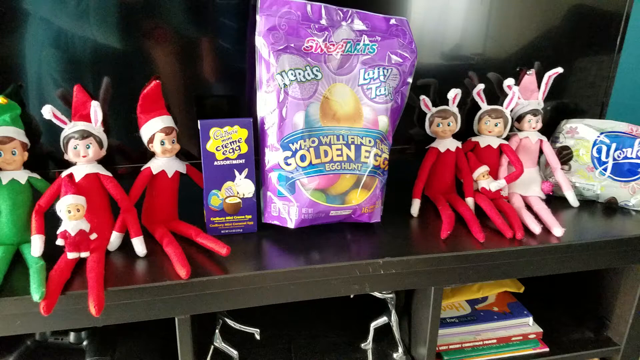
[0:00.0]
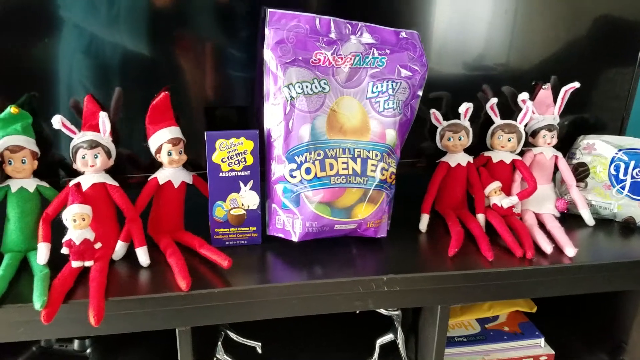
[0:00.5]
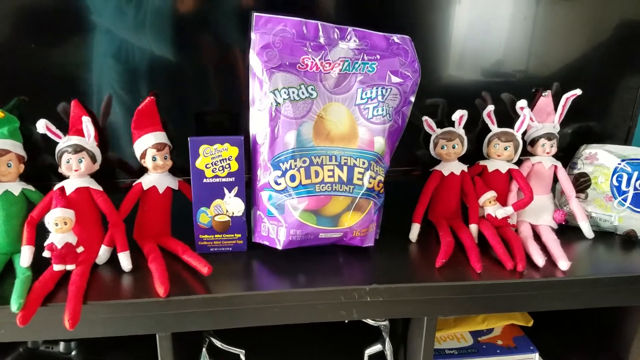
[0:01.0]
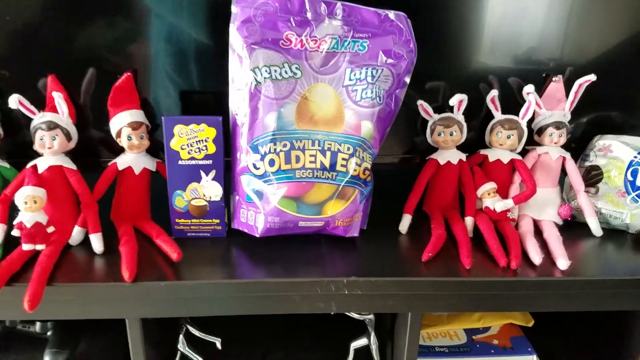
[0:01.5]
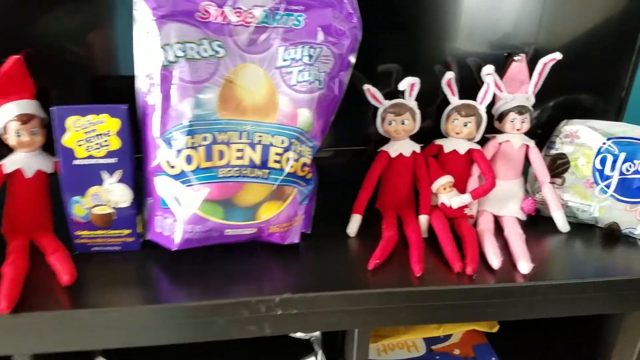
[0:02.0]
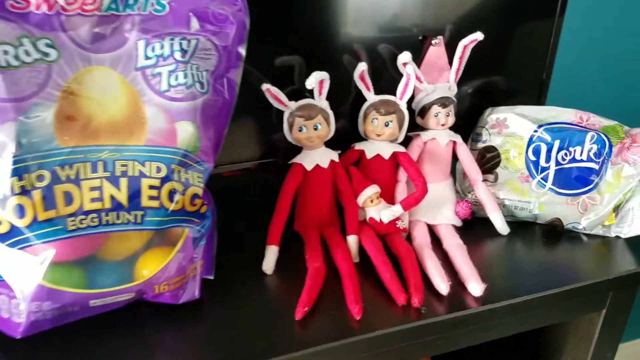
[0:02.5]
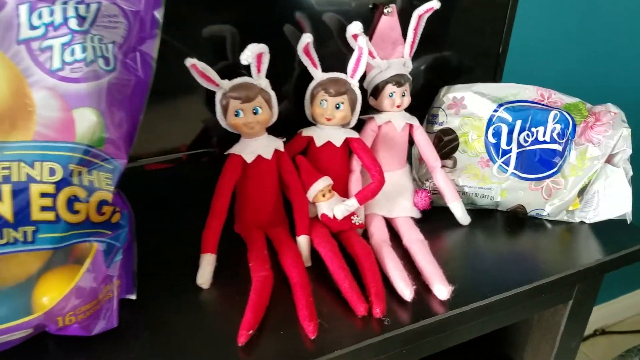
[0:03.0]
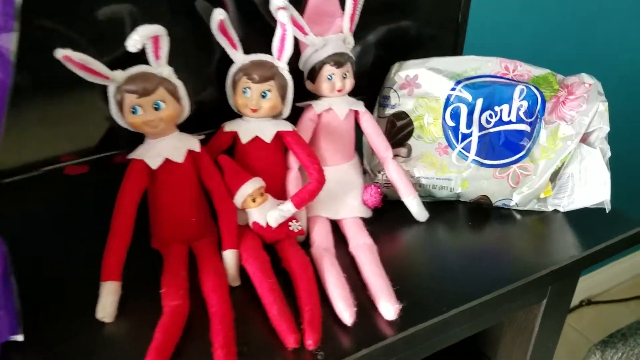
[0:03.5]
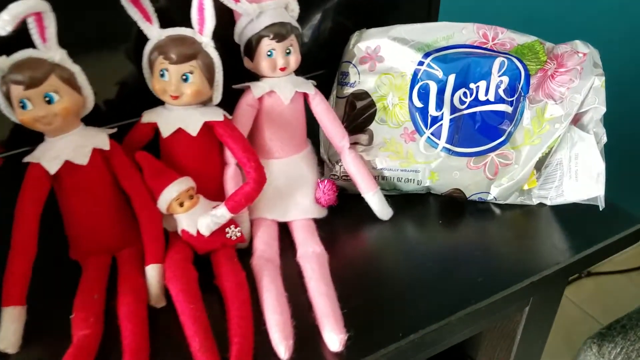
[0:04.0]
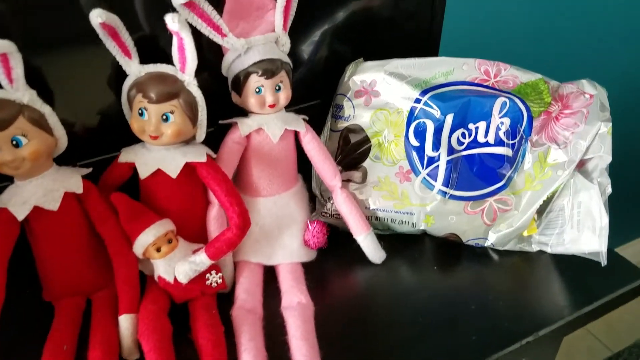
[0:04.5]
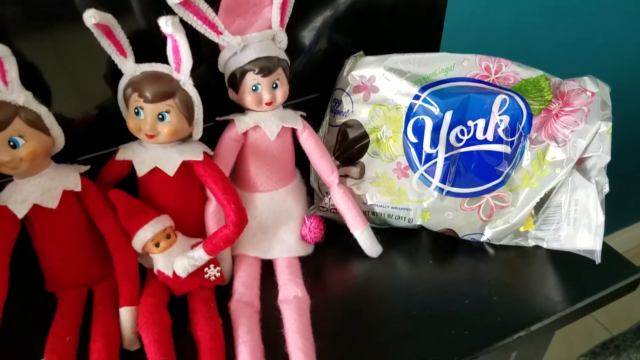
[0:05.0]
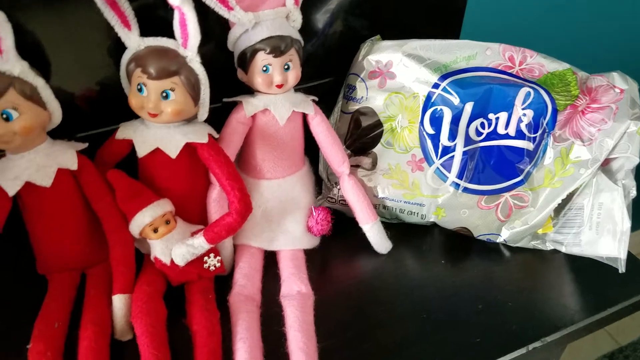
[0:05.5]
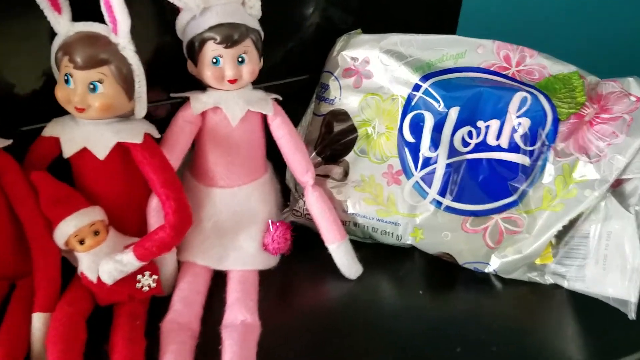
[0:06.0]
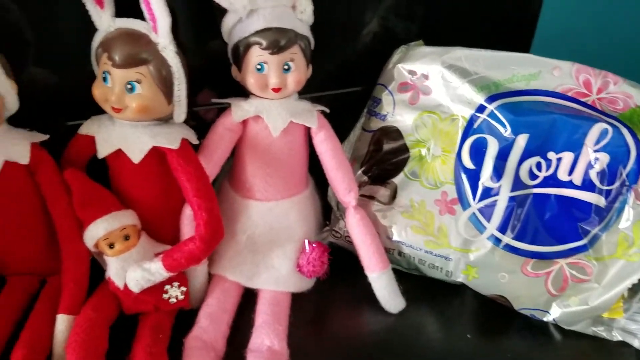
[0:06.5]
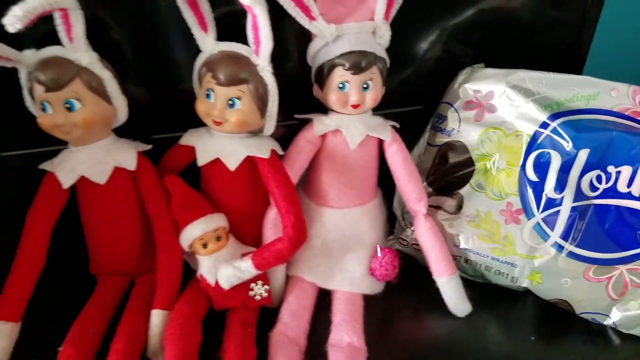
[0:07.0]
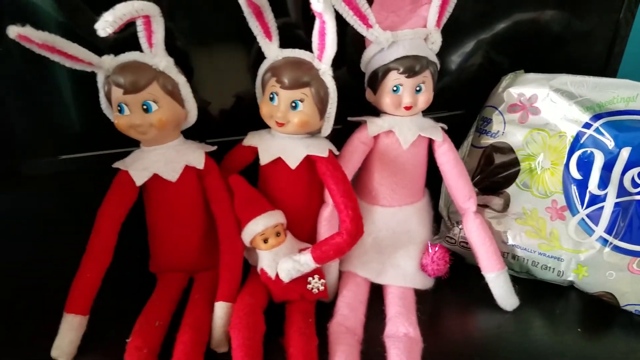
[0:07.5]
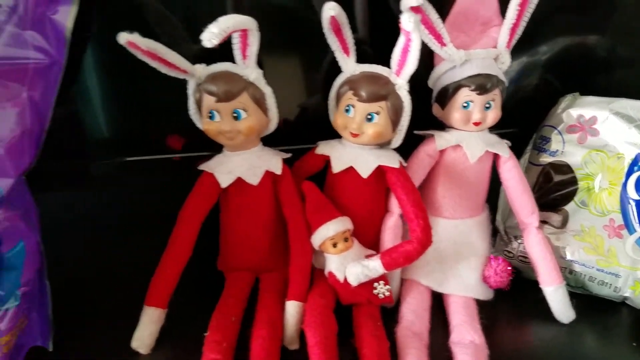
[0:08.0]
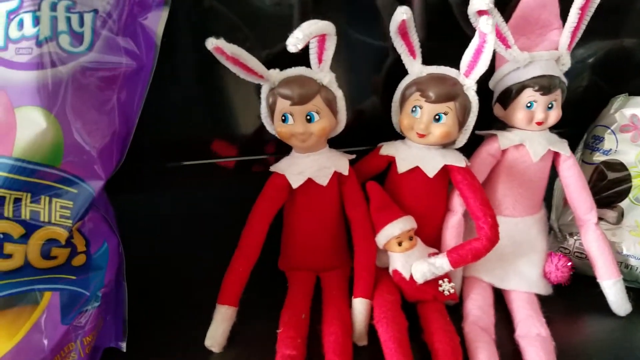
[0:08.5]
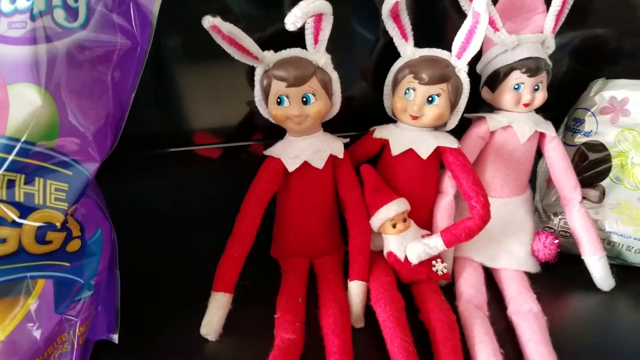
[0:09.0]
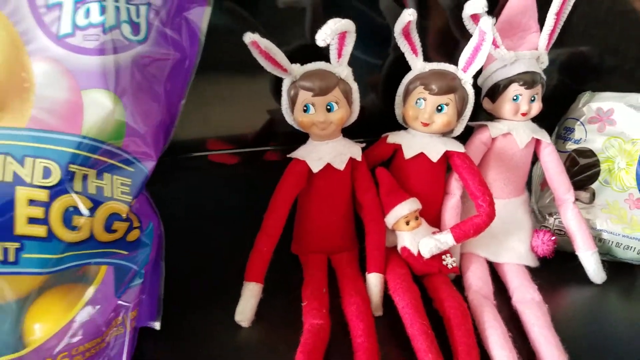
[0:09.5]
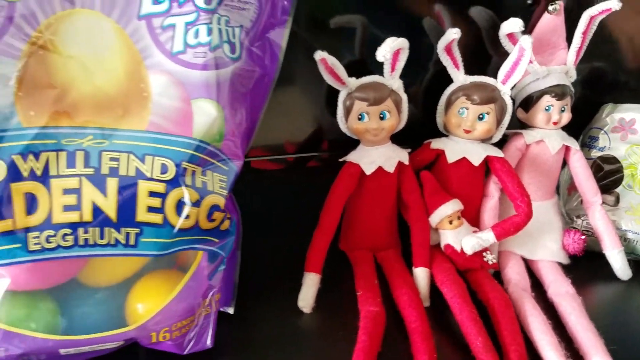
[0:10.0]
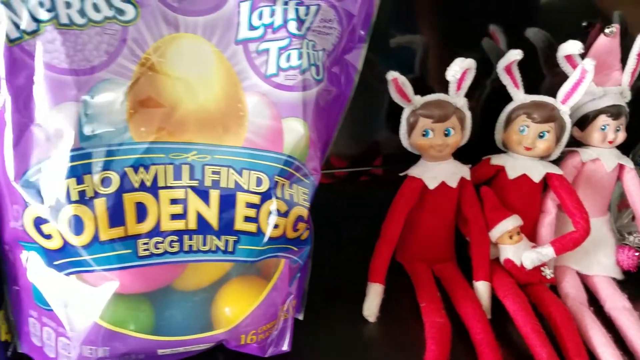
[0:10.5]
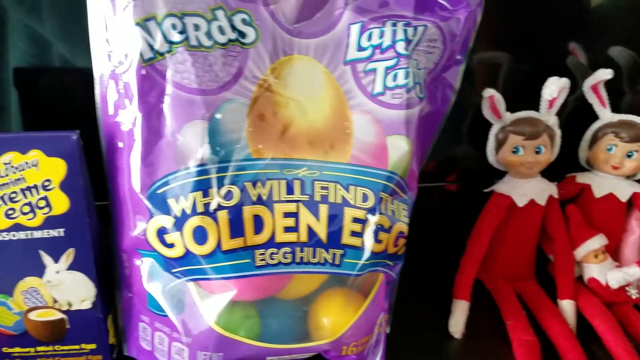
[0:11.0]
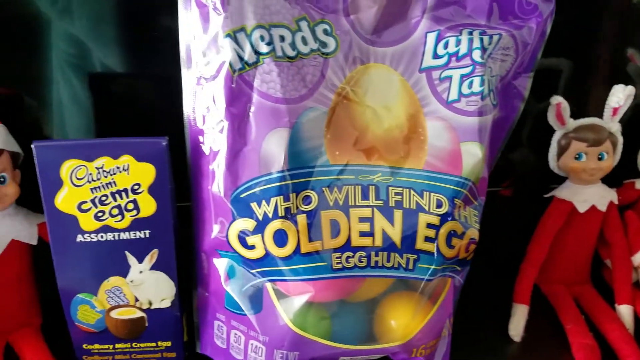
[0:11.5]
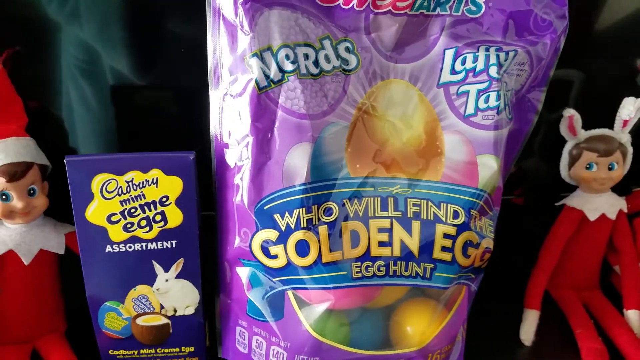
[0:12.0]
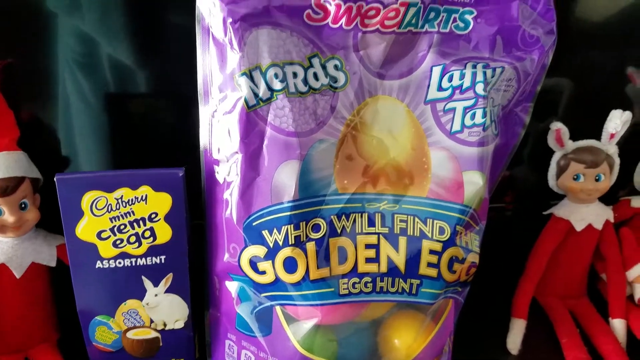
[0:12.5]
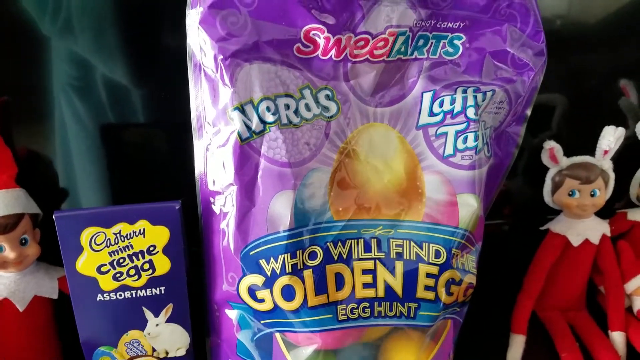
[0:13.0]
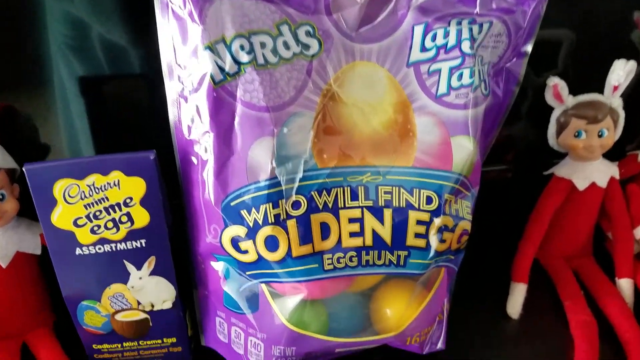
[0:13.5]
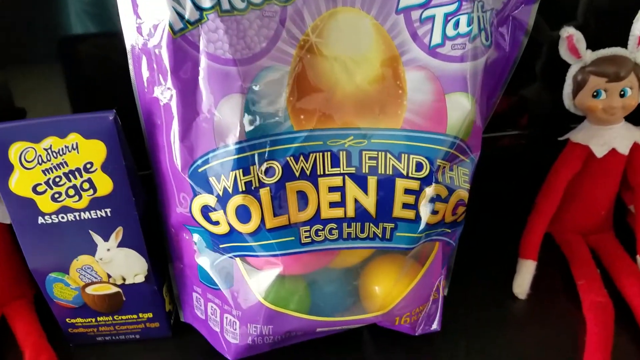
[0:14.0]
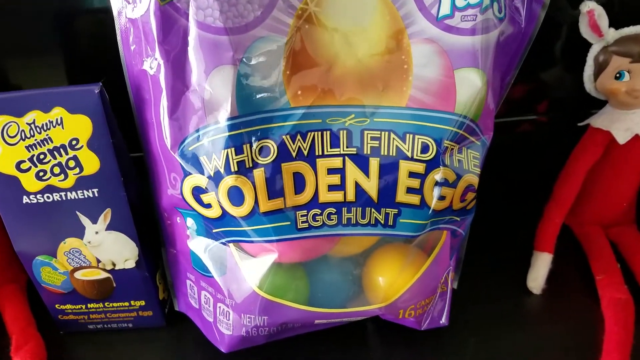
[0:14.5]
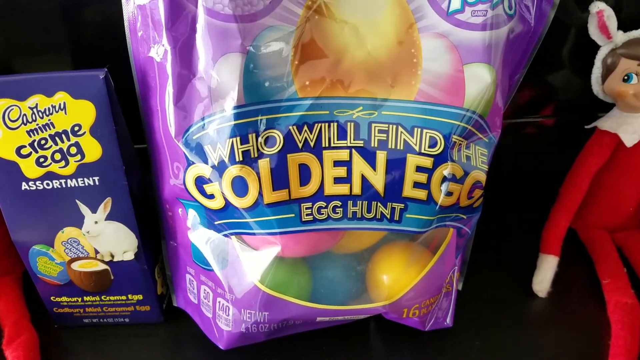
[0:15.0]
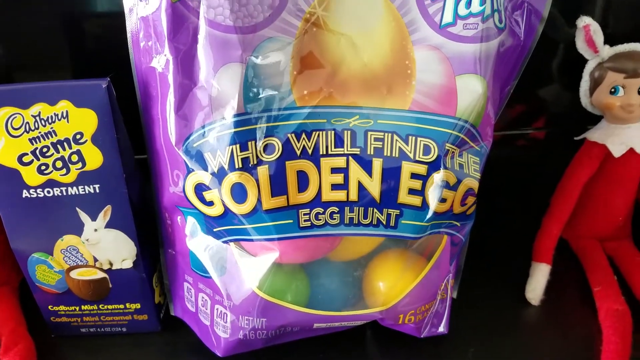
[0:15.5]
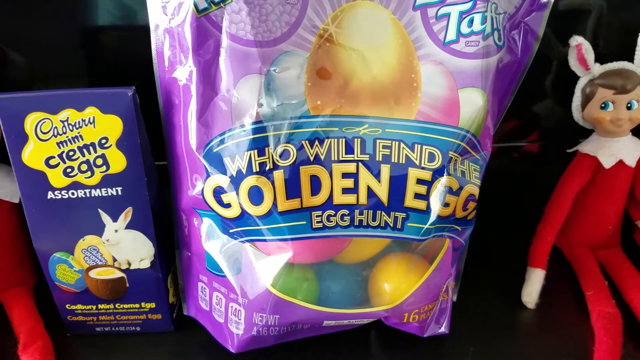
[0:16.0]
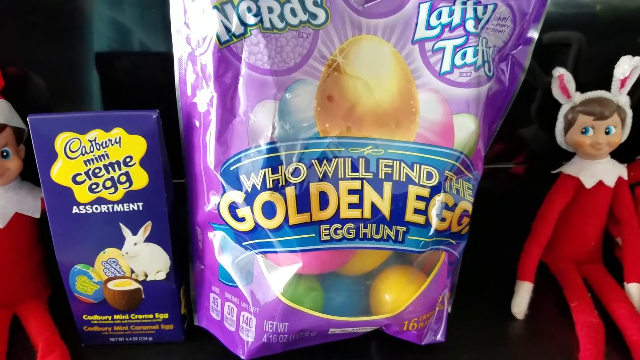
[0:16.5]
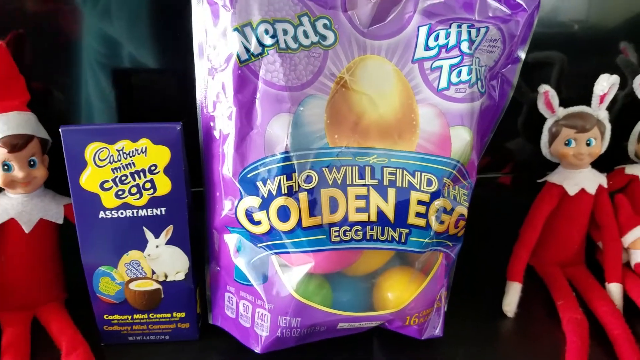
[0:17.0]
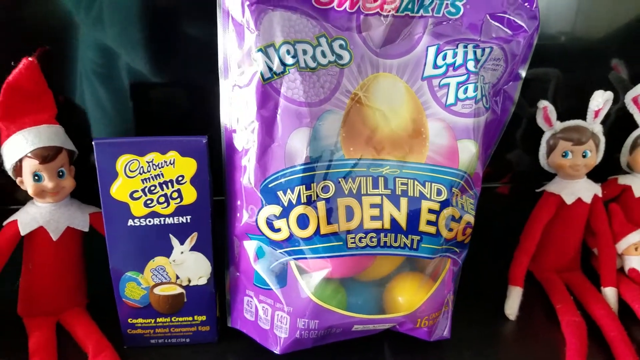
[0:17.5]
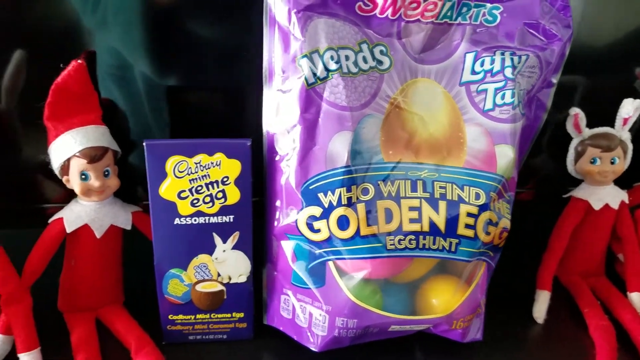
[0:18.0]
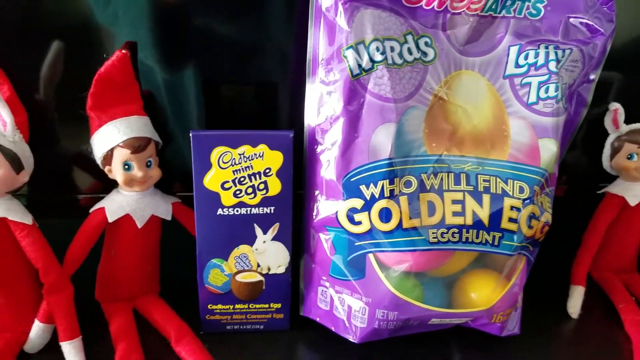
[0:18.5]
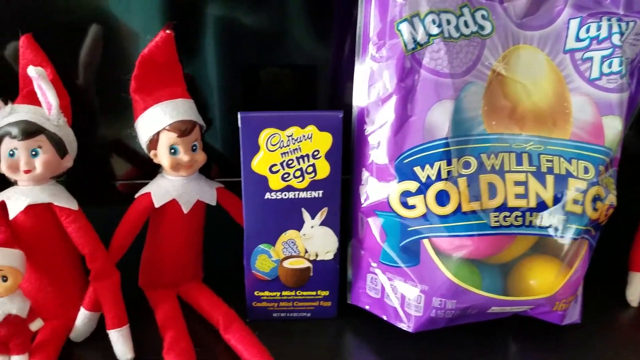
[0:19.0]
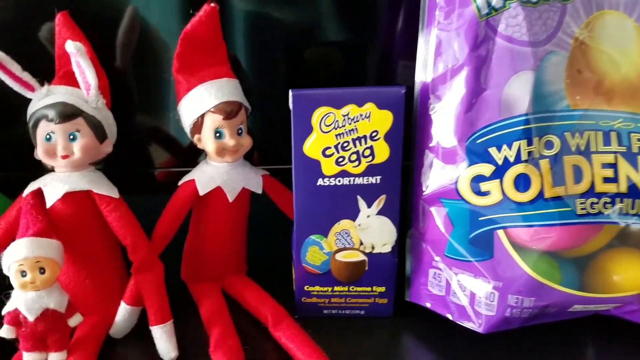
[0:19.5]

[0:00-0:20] The top of a black shelf holds a few Elf on the Shelf toys and packages of candy. The camera pans to the right side, showing a bag of York chocolate patties. To the left of that bag are three Elf on the Shelf toys: one in pink and two in red, with one holding a small baby wearing a Santa hat. The three larger toys have white bunny ears on their heads. The camera pans past the toys, and to their left is a large purple bag of Nerds candy eggs. A small clear panel at the bottom of the packaging shows large, colorful eggs, and gold letters on the front read "who will find the golden egg egg hunt." To the left of that is a purple box of Cadbury Mini Cream Egg Assortment. Further left are two Elf on the Shelf toys in red, one of them holding a small baby with a Santa hat on. The two larger toys wear Santa hats, and one of them also wears white bunny ears.